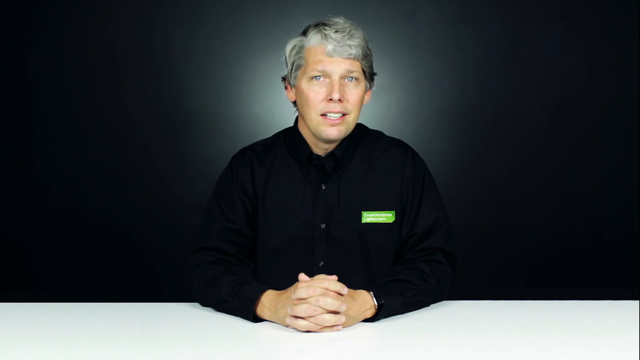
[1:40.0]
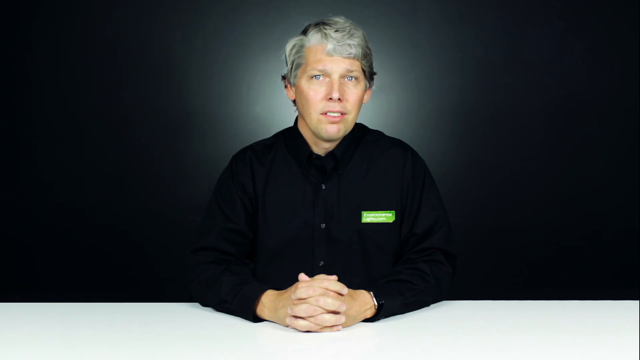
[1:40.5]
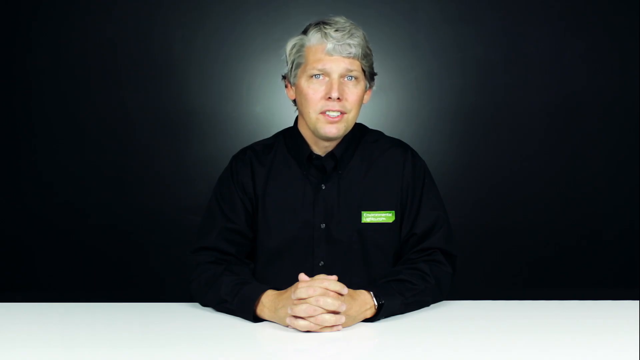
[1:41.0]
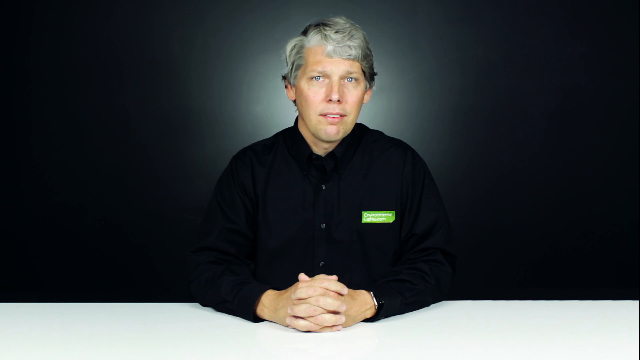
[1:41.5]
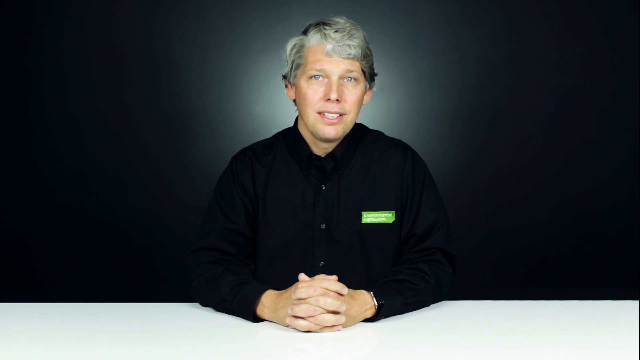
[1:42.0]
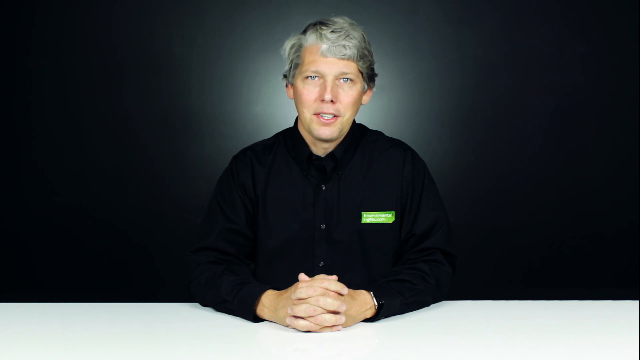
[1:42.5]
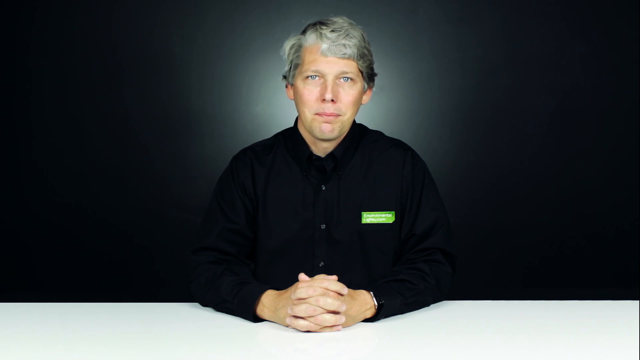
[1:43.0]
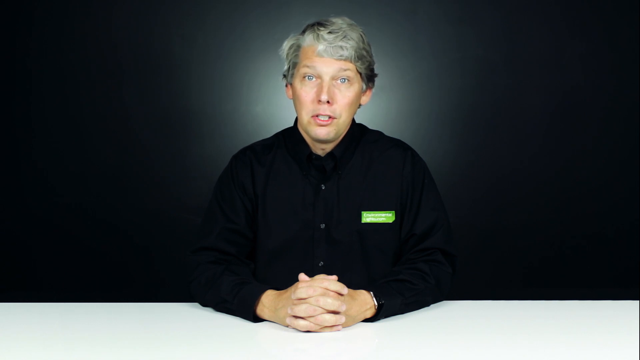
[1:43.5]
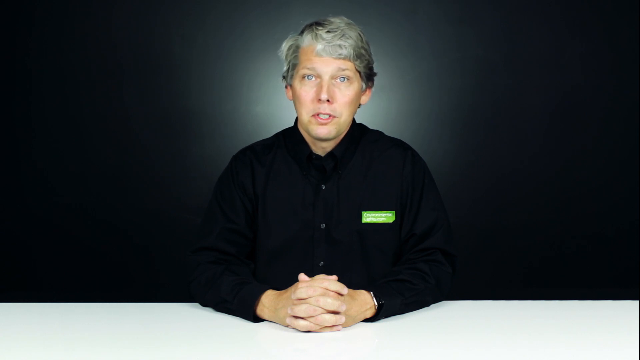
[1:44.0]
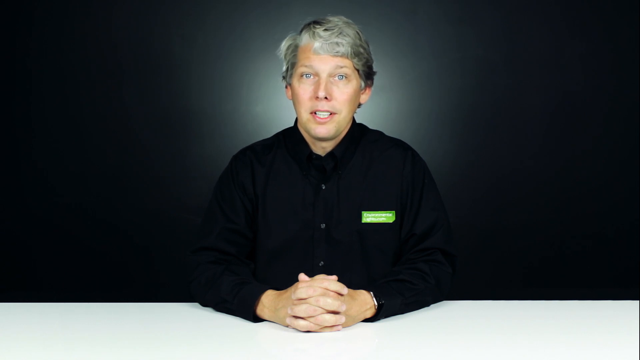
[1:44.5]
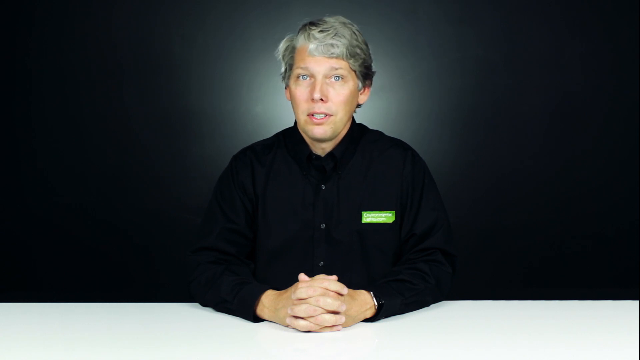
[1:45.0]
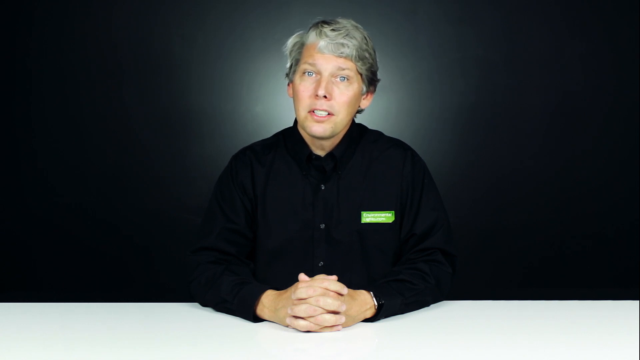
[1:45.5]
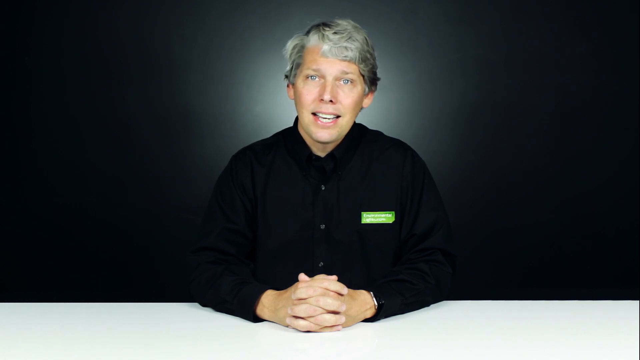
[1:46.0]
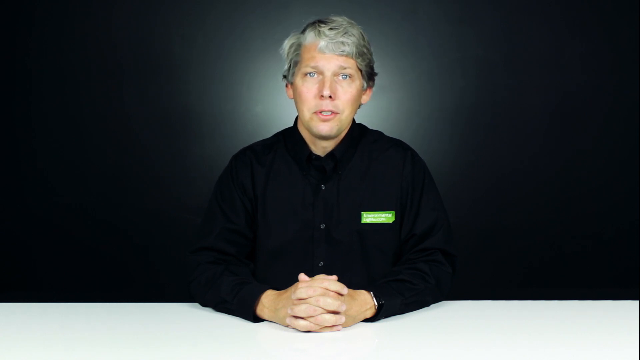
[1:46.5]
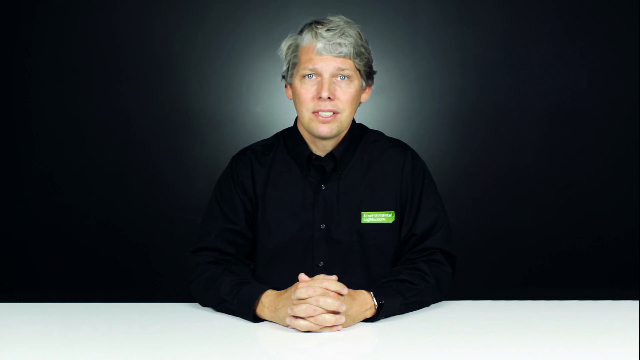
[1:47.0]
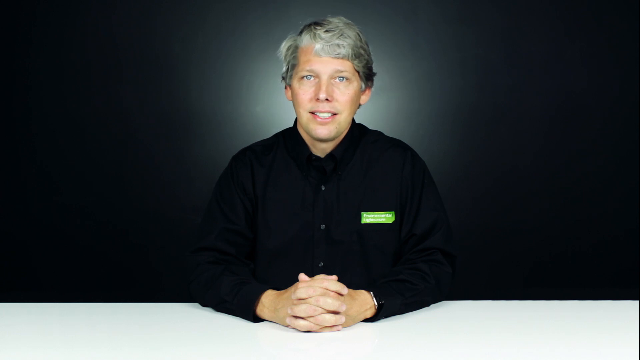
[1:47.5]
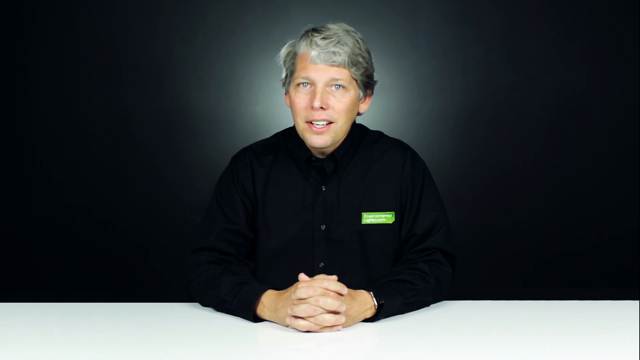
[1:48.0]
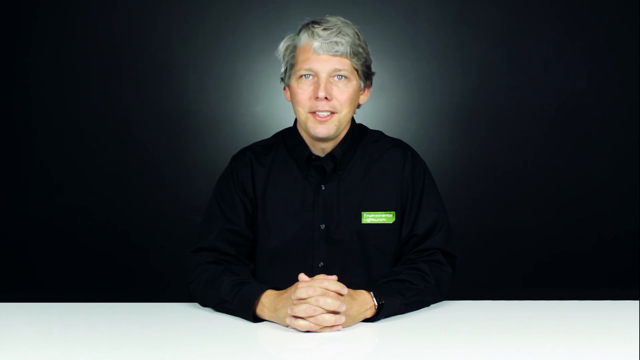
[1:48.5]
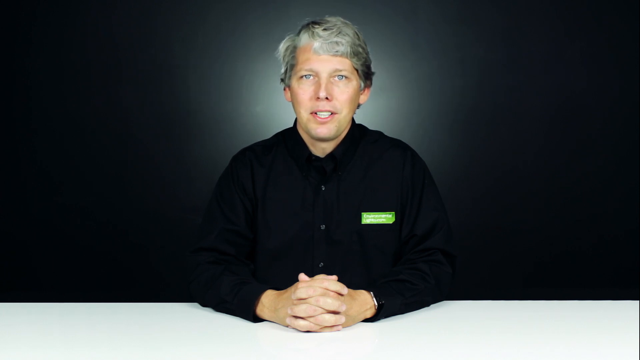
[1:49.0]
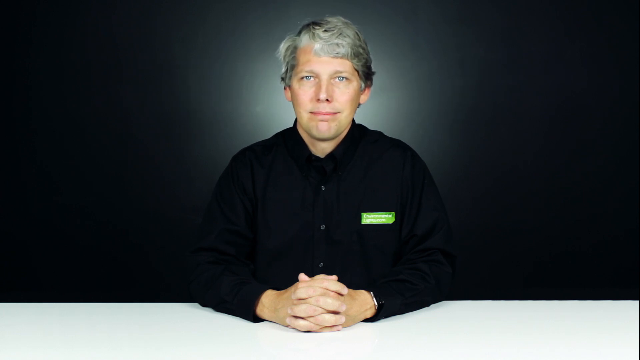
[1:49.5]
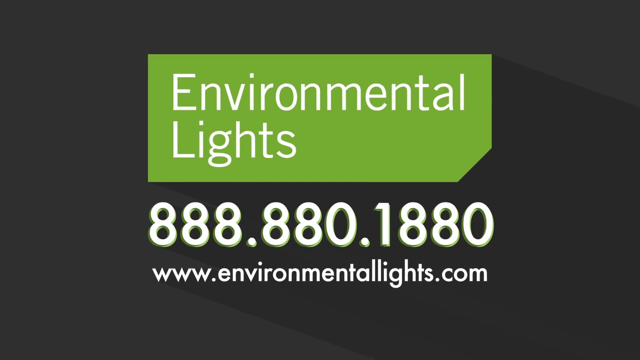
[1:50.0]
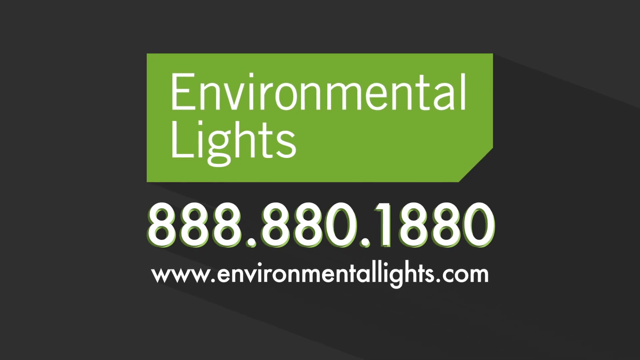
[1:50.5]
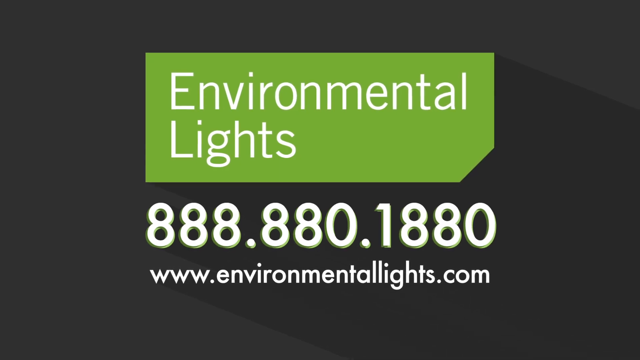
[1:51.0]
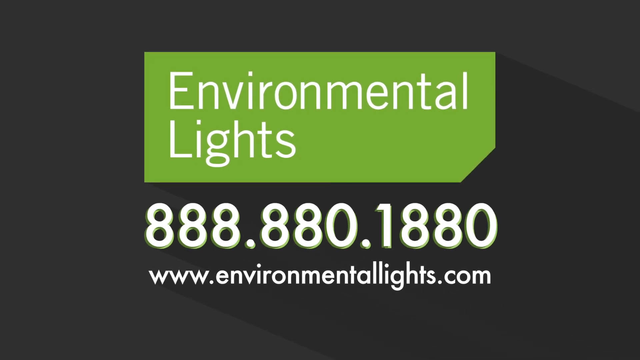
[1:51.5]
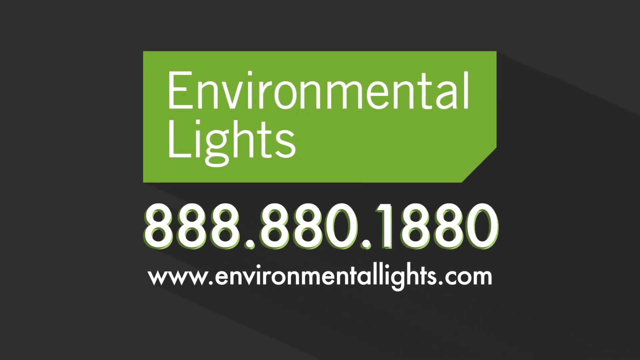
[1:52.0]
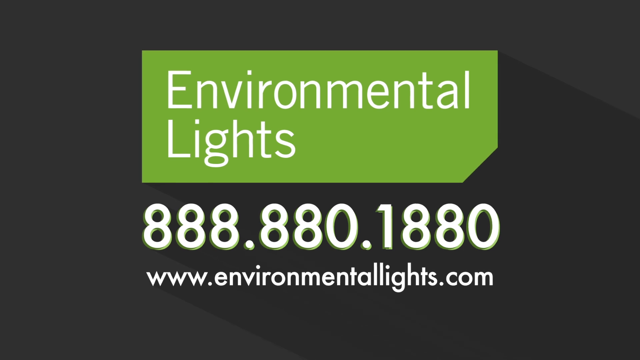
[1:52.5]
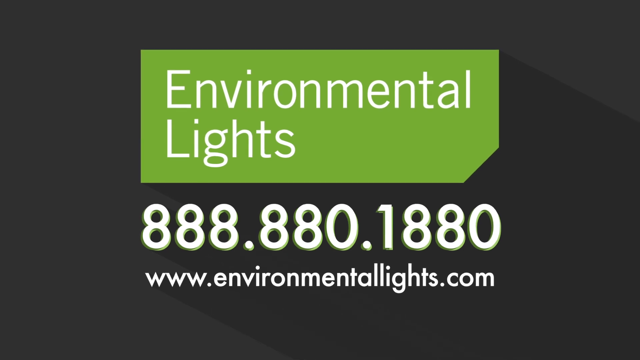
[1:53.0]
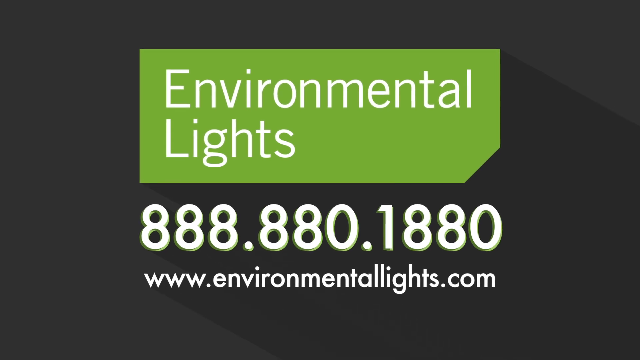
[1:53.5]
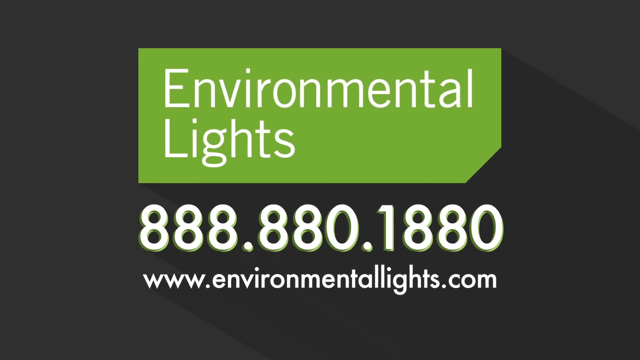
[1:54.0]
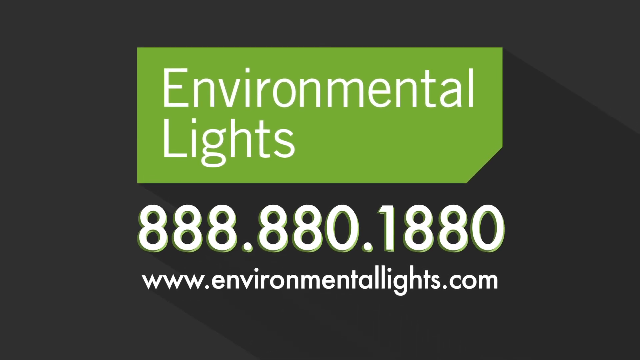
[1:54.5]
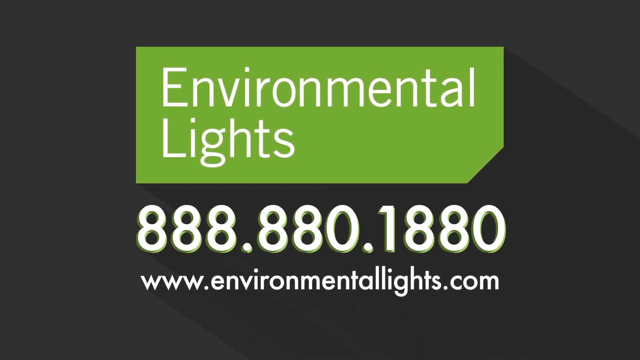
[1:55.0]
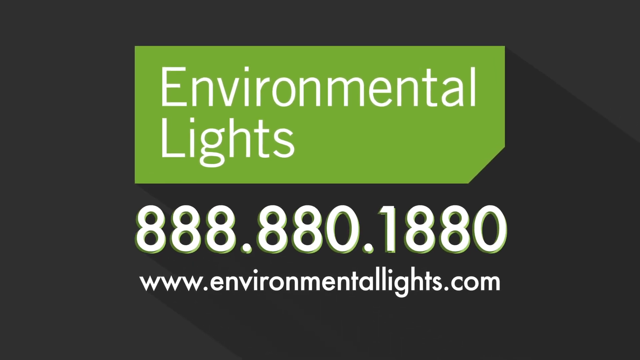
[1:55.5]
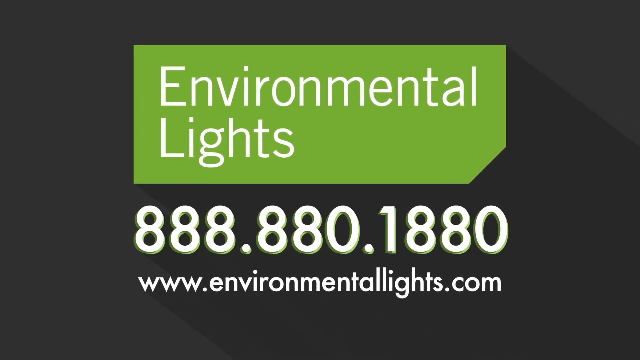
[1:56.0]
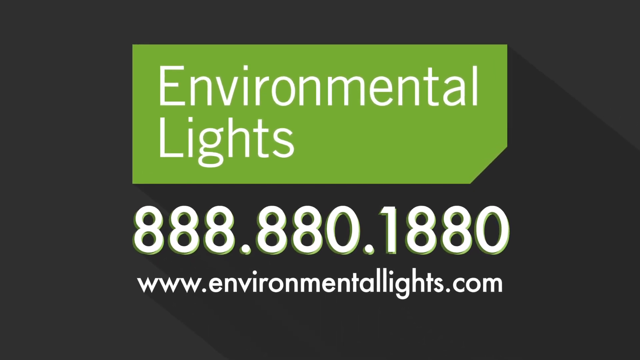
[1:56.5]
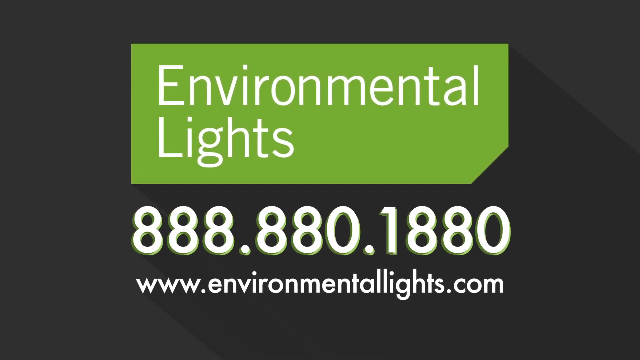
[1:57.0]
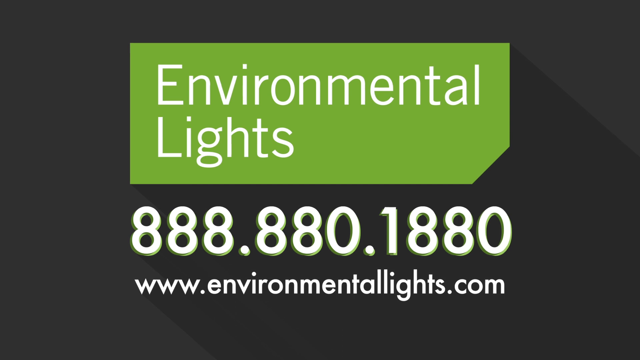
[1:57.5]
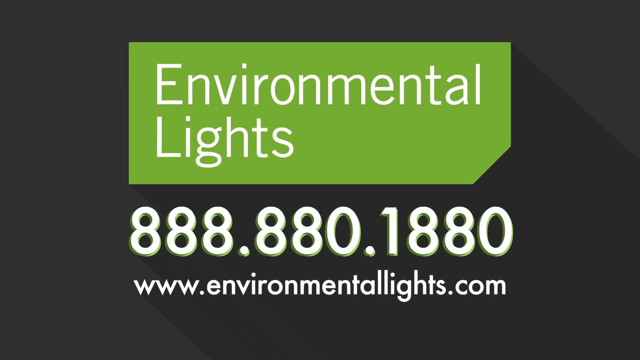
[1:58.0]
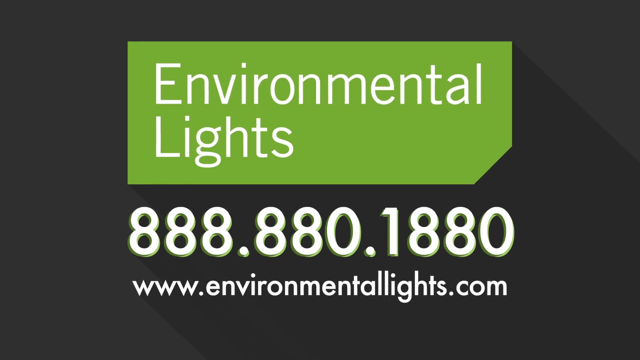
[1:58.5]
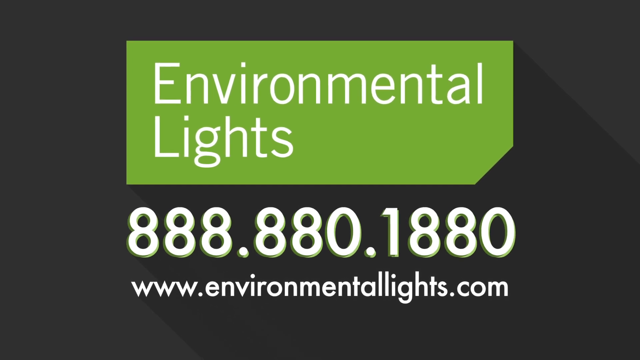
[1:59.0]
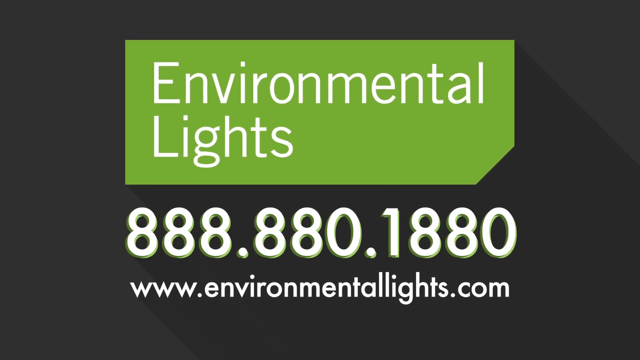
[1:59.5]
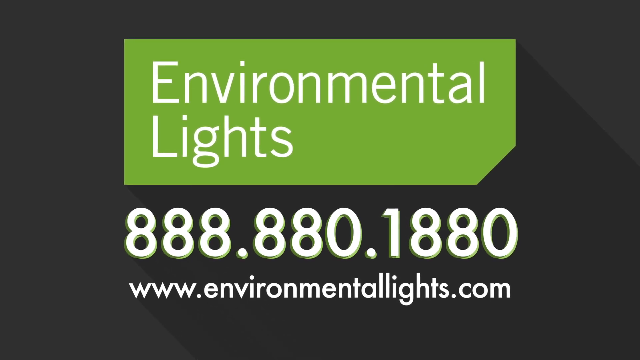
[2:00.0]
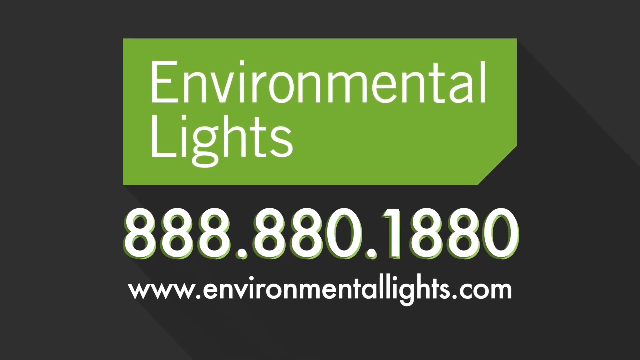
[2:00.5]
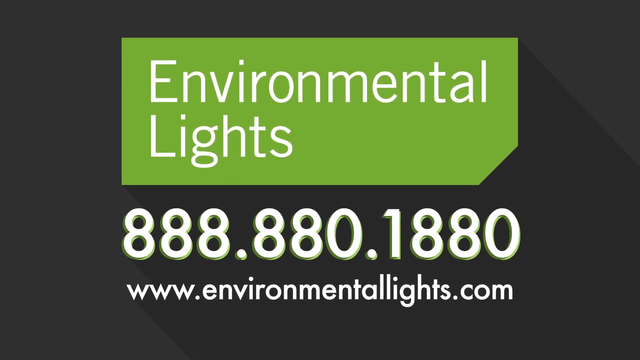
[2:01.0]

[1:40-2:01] The same person is talking, and the video shows what seems to be some electric convertible or electric carrier. The video apparently shows an environmental factor. Information is displayed: "environmental lights", "3.8.880.1880" and "www.environmentallights.com".